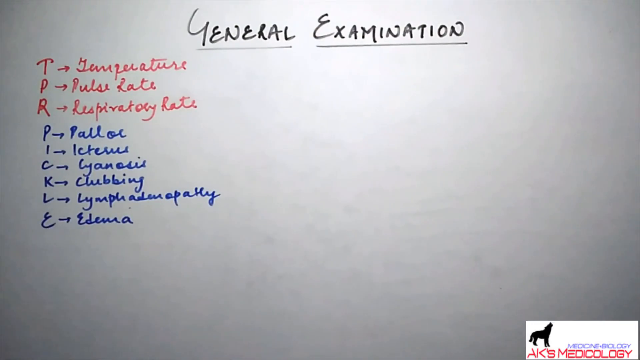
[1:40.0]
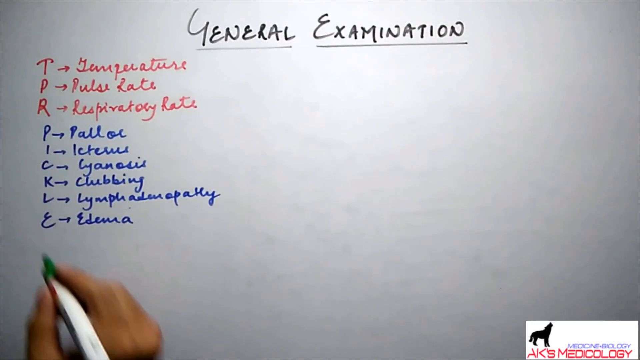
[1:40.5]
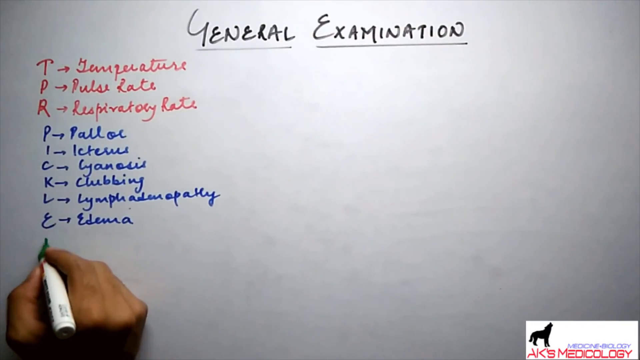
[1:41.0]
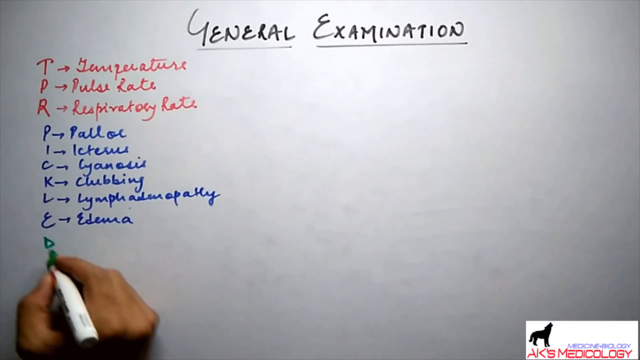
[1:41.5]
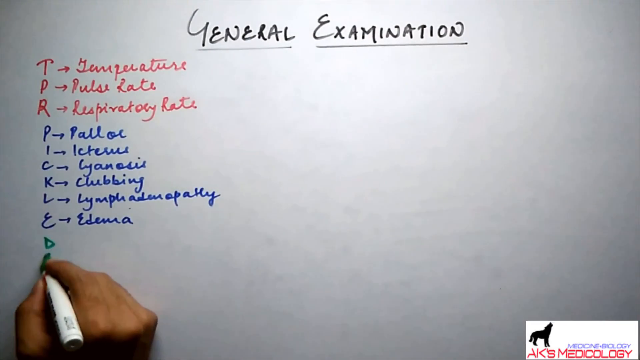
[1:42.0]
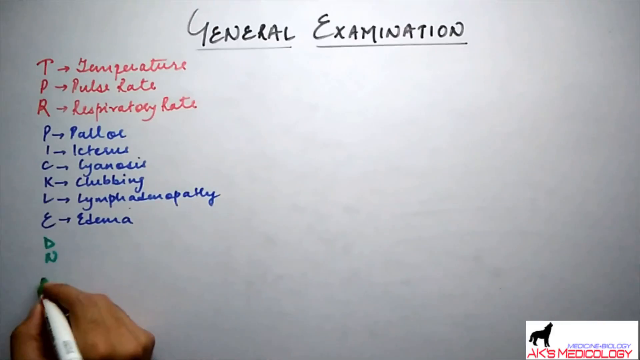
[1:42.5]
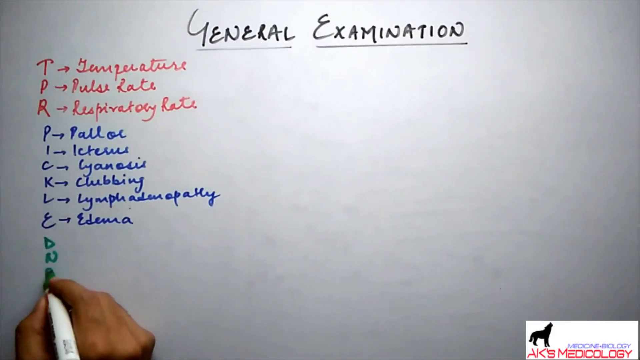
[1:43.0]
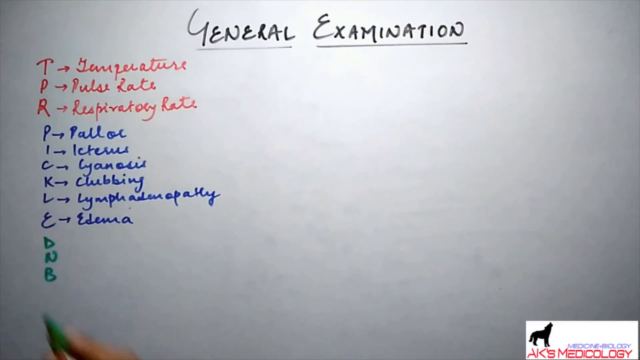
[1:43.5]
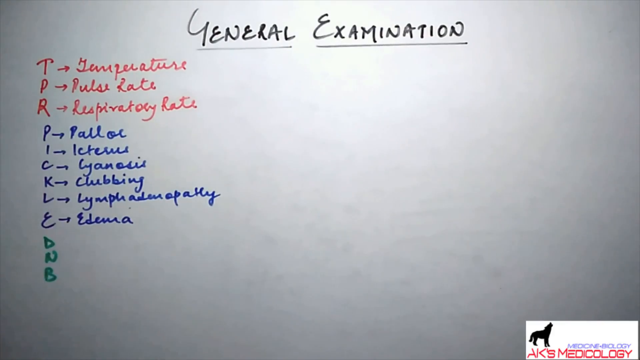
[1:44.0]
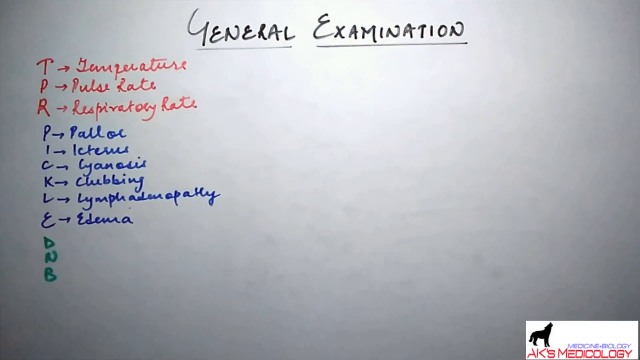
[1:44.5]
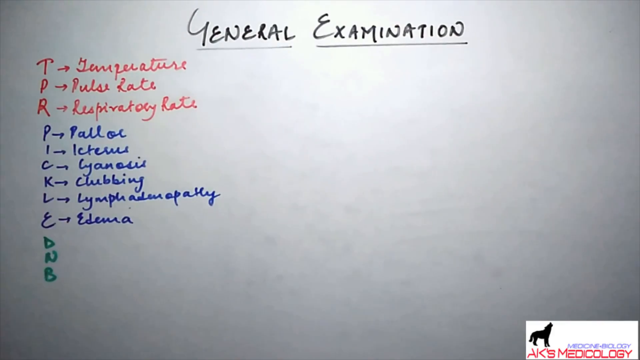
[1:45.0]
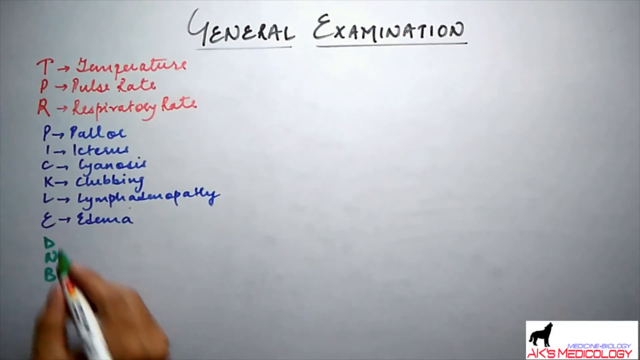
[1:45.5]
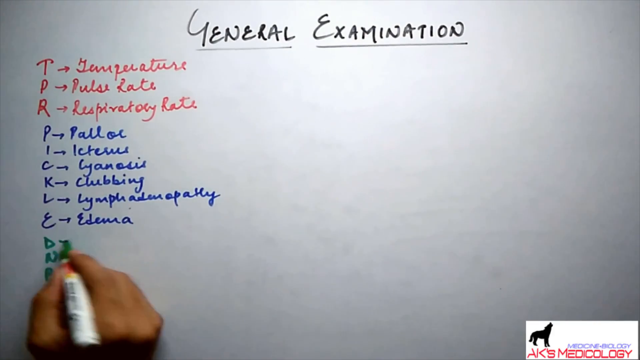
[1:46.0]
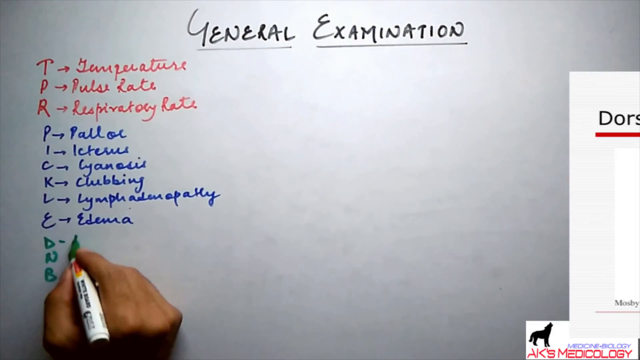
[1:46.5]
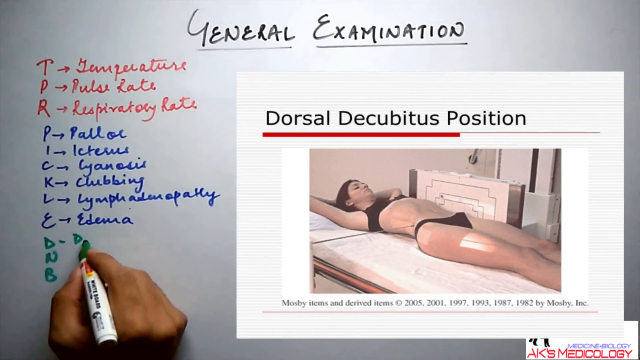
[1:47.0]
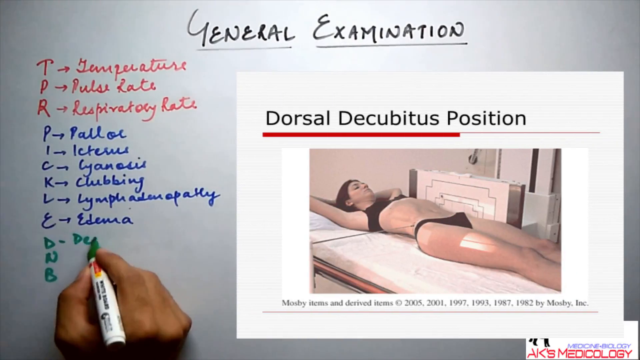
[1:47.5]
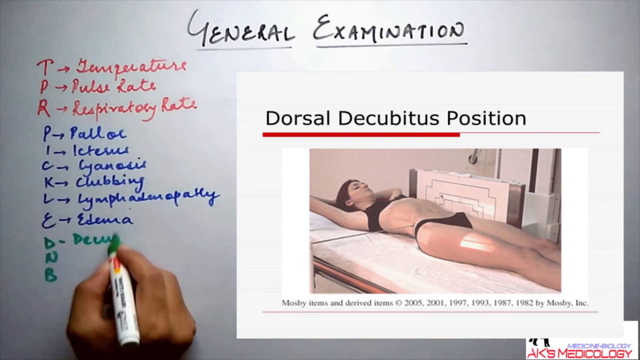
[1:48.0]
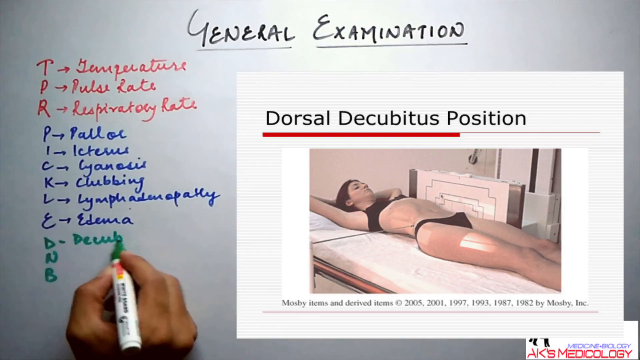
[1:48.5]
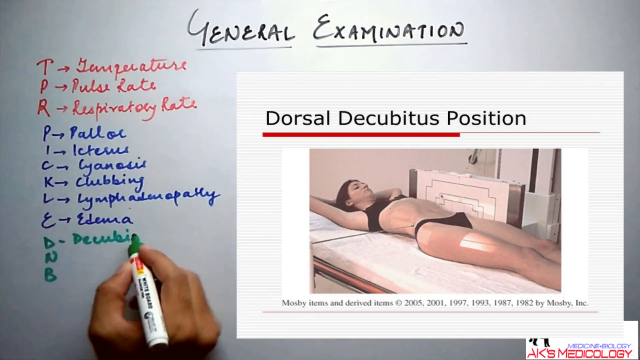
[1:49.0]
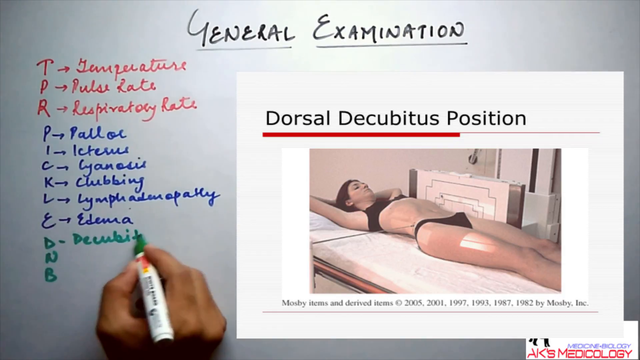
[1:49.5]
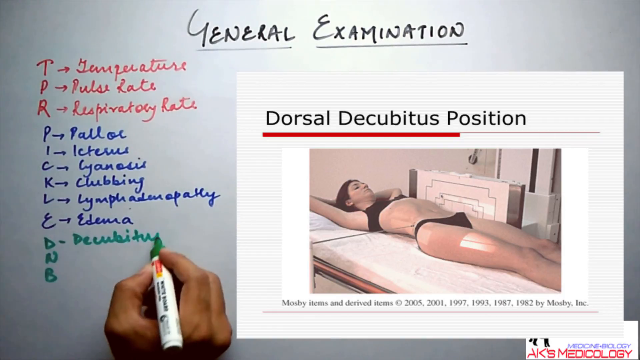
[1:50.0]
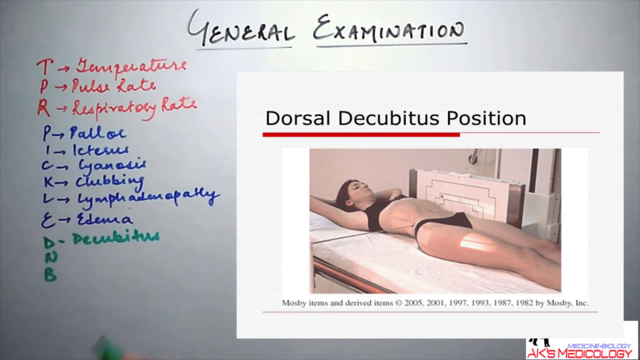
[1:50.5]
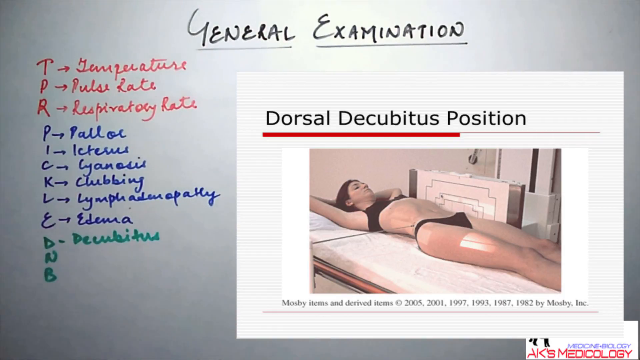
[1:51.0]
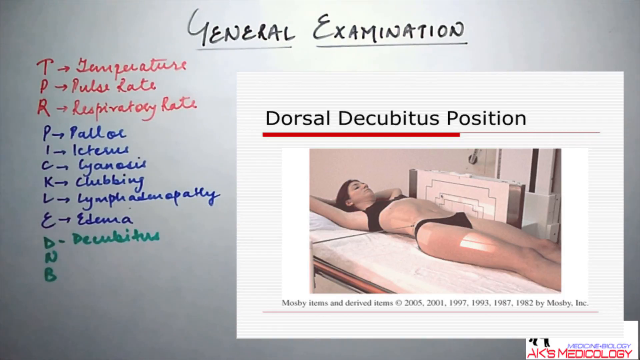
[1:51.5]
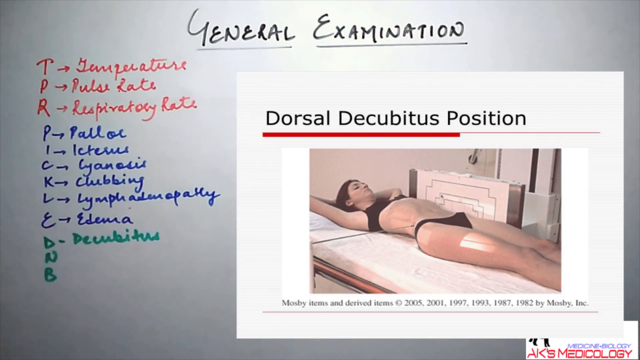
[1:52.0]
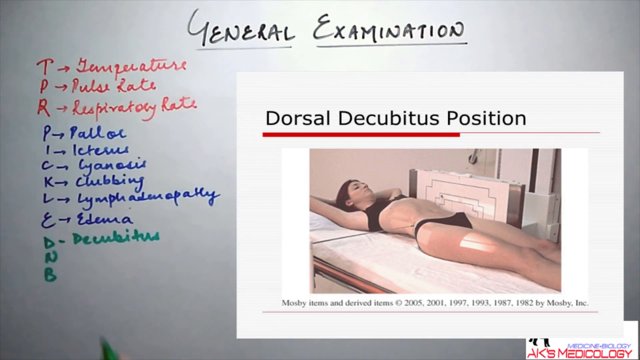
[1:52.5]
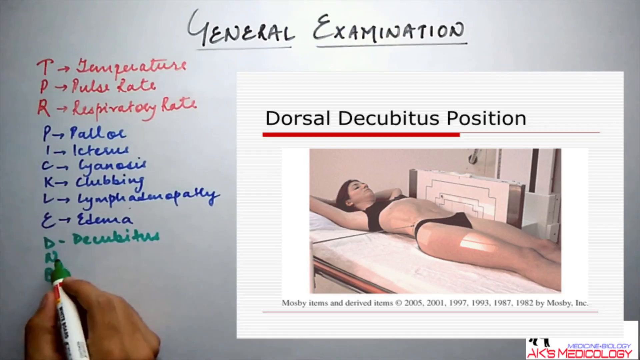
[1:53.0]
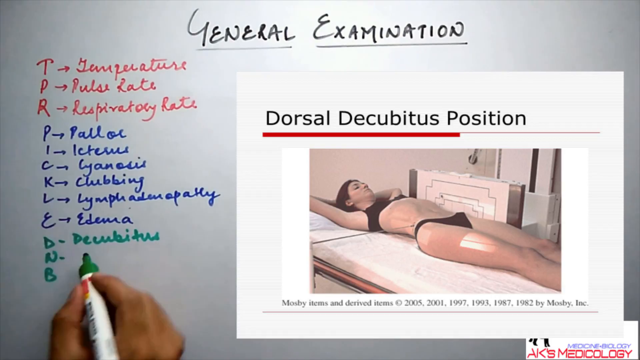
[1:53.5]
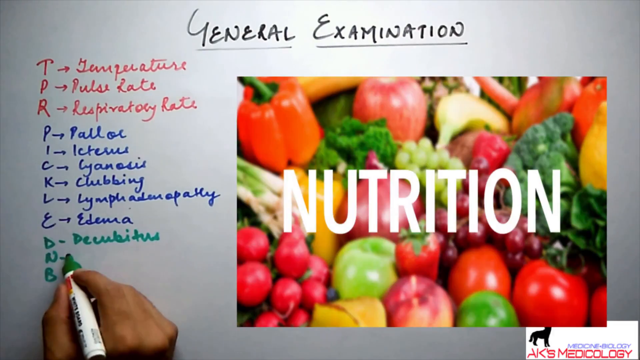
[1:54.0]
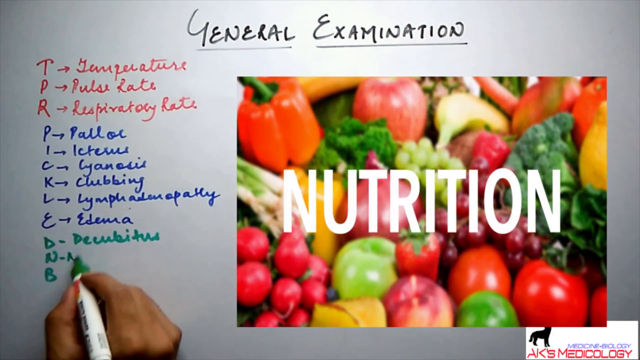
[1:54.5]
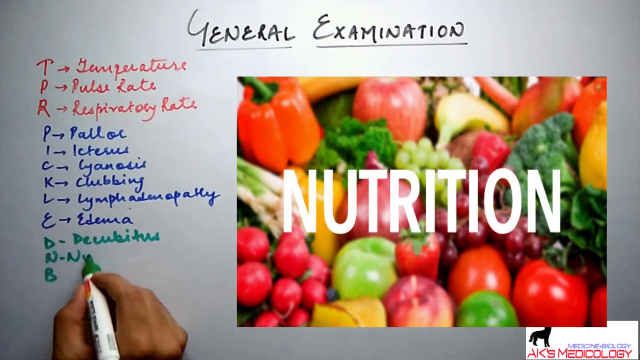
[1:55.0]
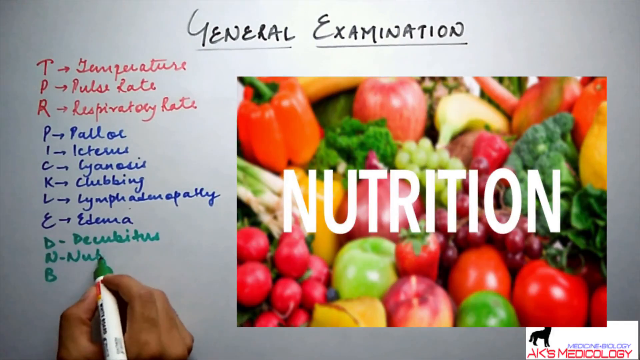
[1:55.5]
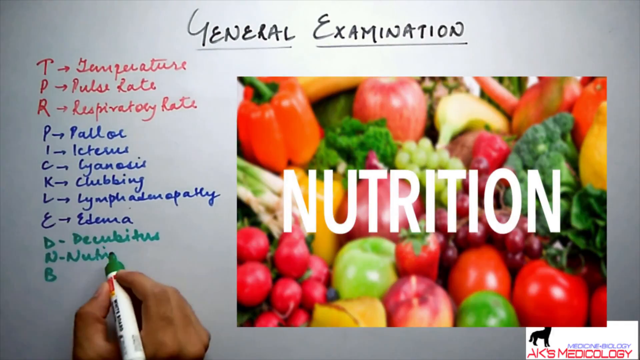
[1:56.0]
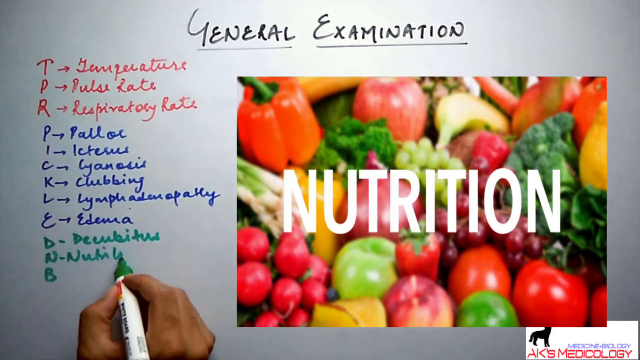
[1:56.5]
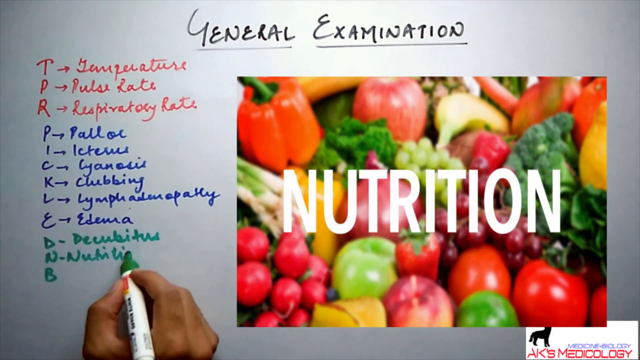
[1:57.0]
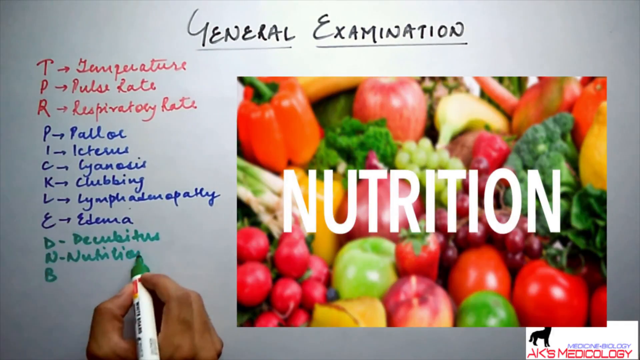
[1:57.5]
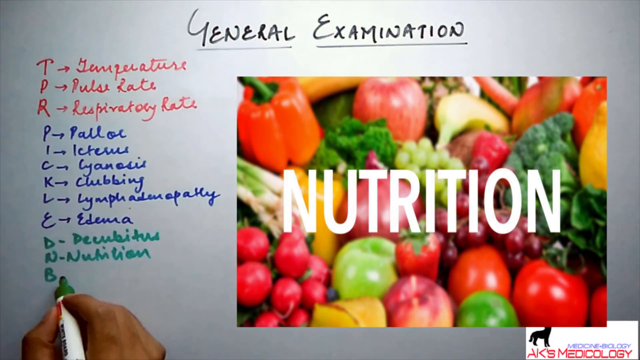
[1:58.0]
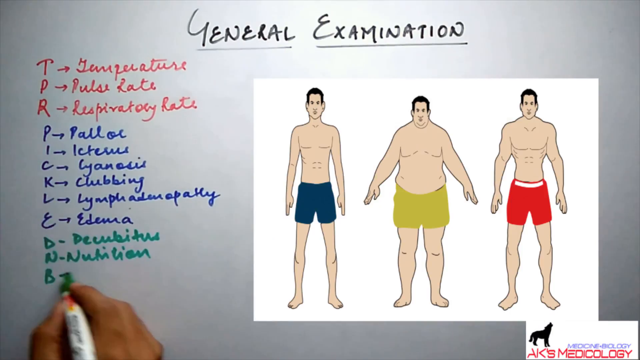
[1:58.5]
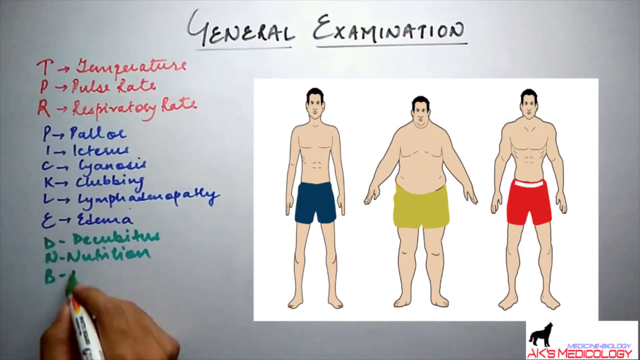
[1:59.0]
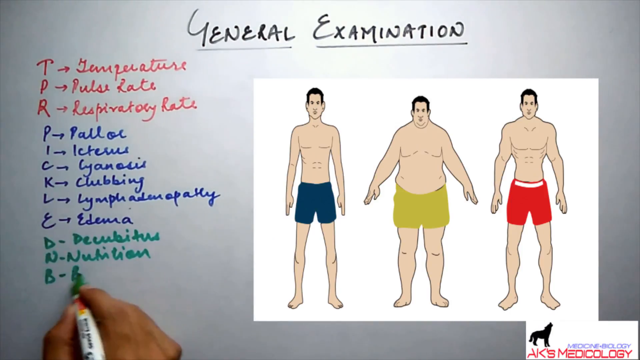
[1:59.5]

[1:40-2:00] The white board shows "general examination" with letters in different colors: T, P, R in red ink for temperature, pulse rate and respiratory rate, and P, I, C, K, L, E in blue ink. As the person writes, a picture illustrating each written word is shown. The person writes the letters D, N and B, with D standing for dorsal decubitus position. A picture appears of a woman lying on her back on an examination table in an office, arms lifted up to the side of her head as she gets an x-ray.